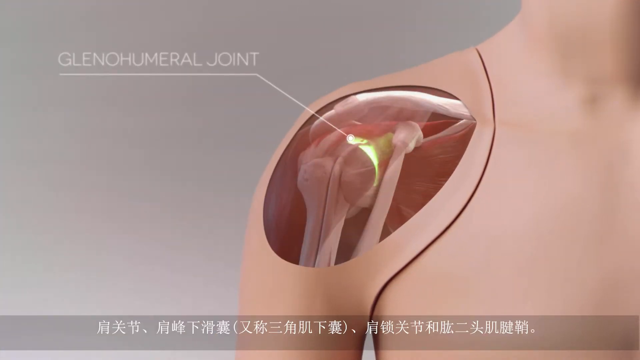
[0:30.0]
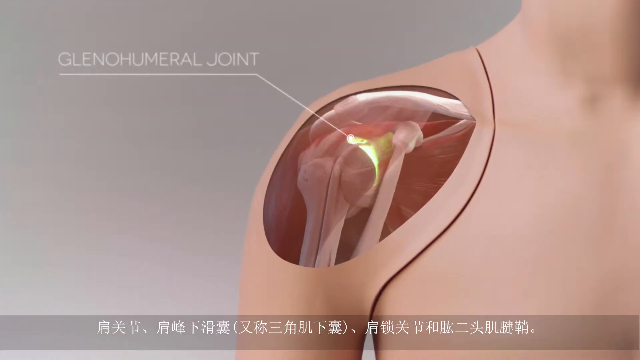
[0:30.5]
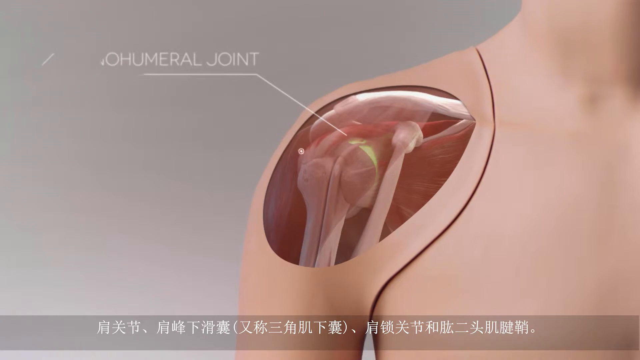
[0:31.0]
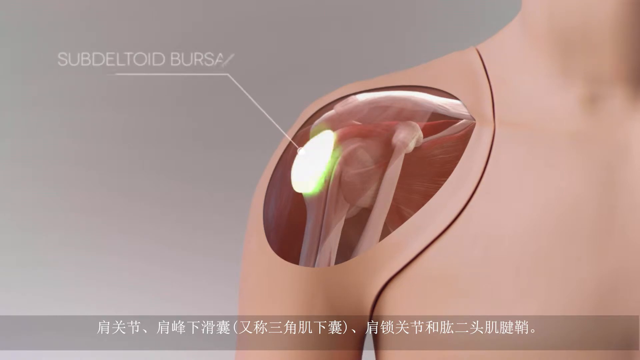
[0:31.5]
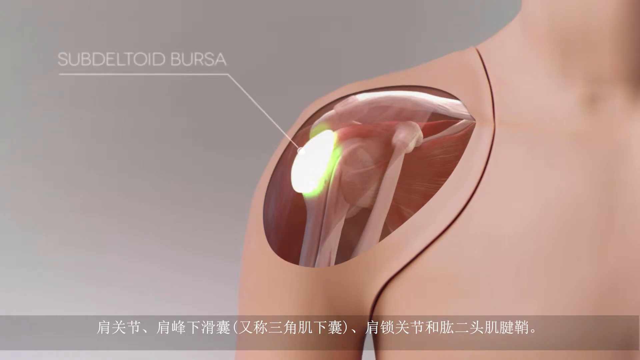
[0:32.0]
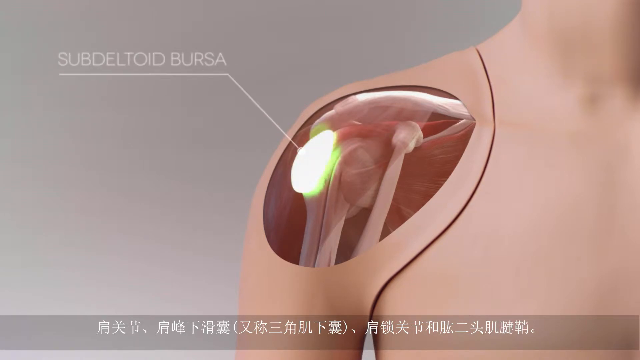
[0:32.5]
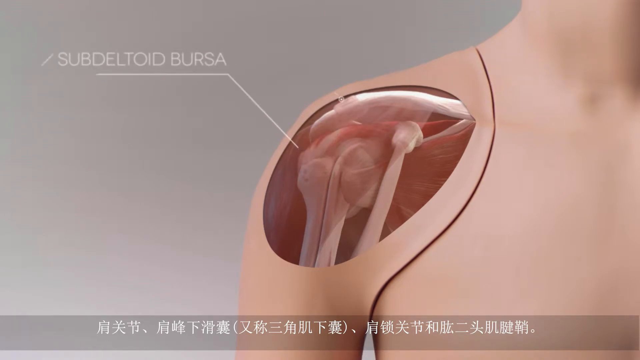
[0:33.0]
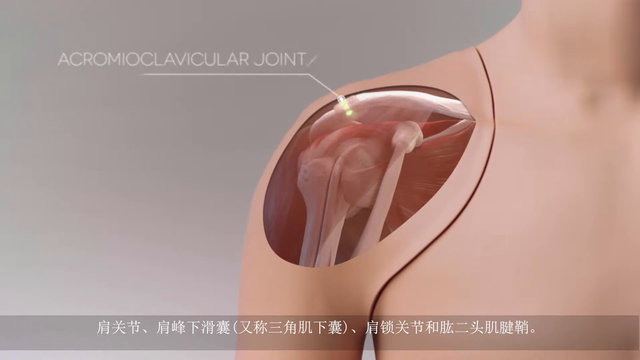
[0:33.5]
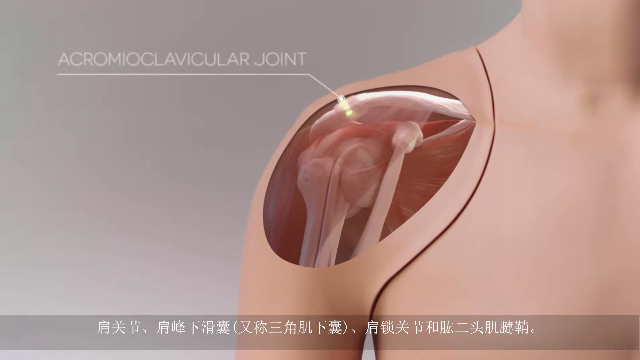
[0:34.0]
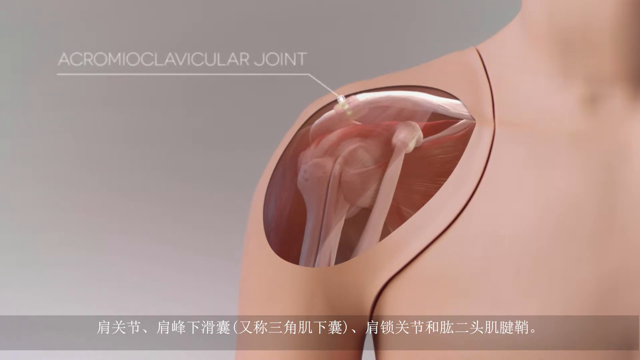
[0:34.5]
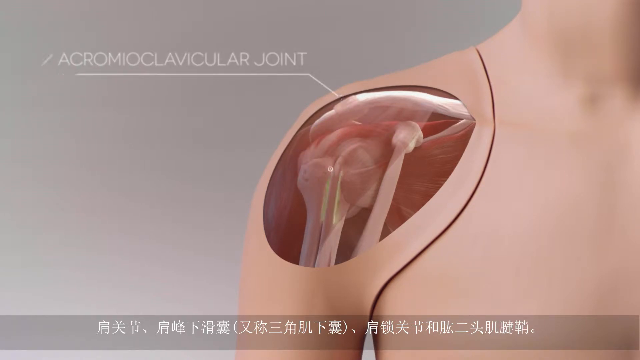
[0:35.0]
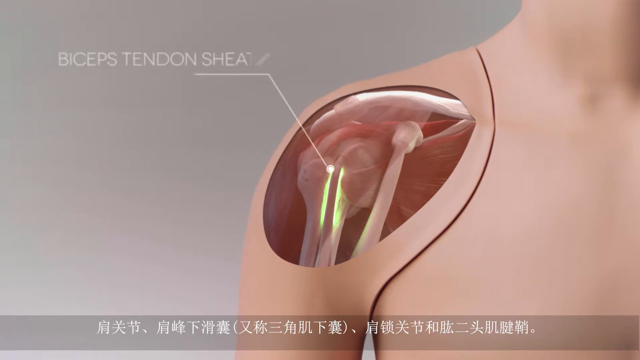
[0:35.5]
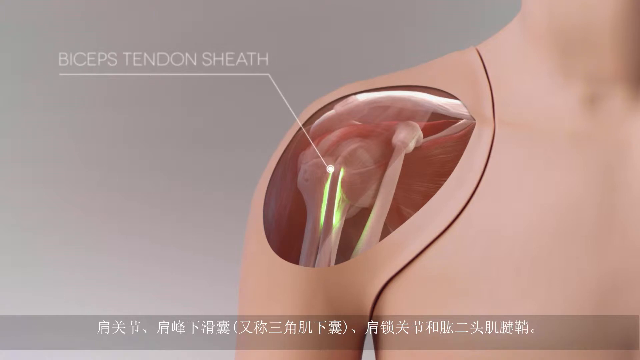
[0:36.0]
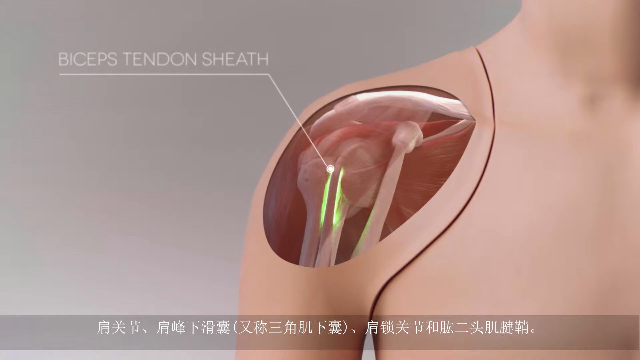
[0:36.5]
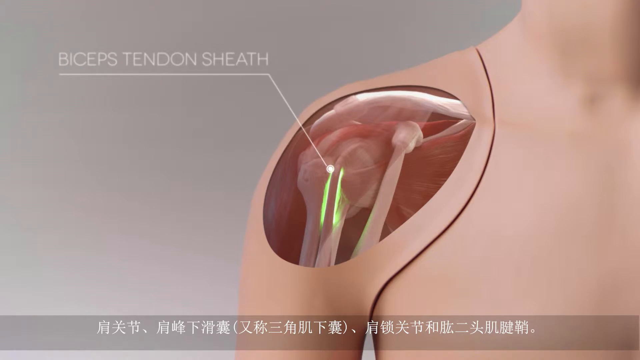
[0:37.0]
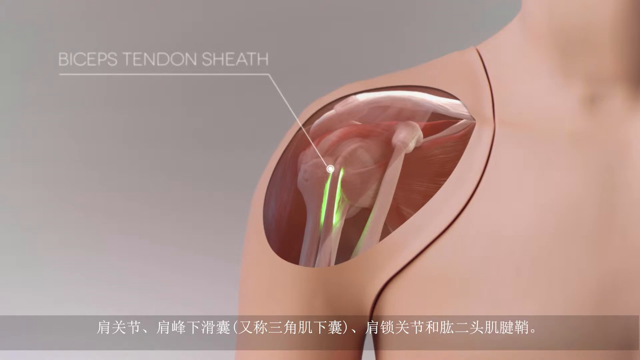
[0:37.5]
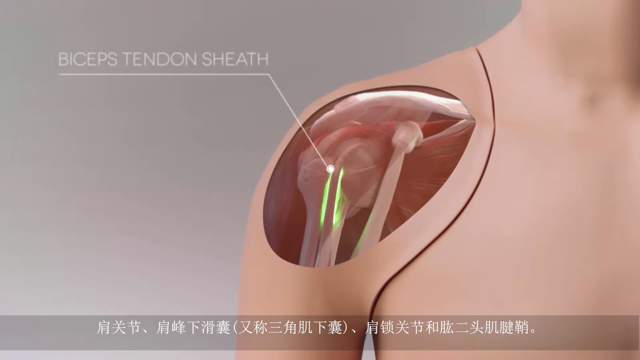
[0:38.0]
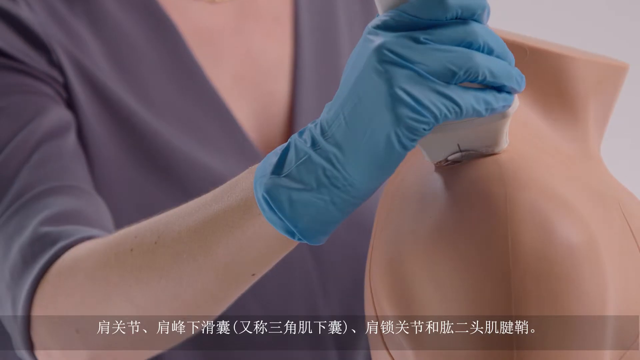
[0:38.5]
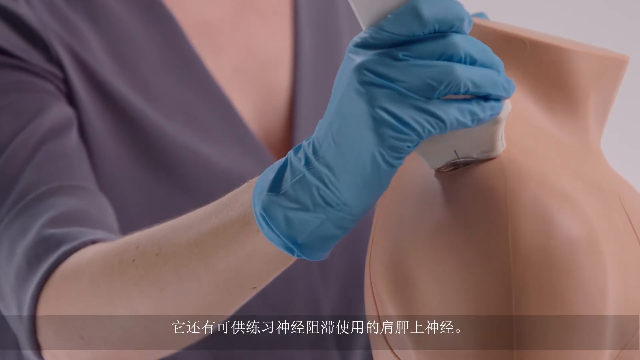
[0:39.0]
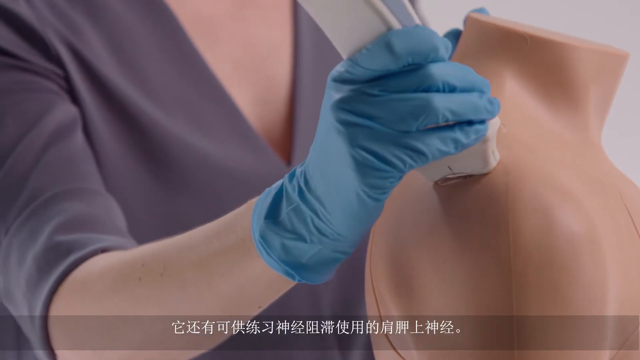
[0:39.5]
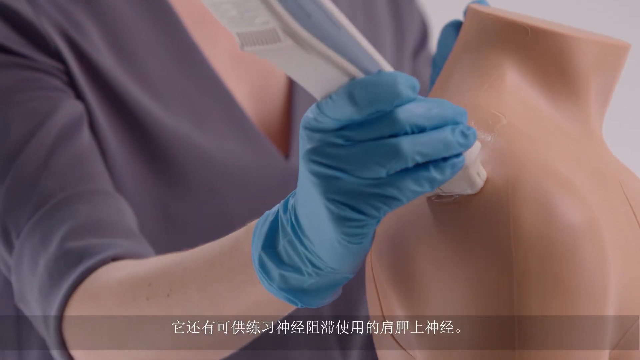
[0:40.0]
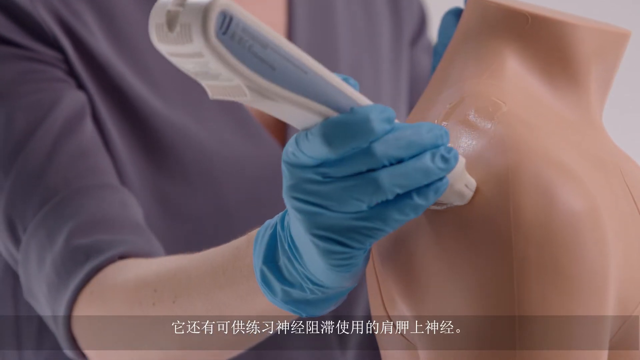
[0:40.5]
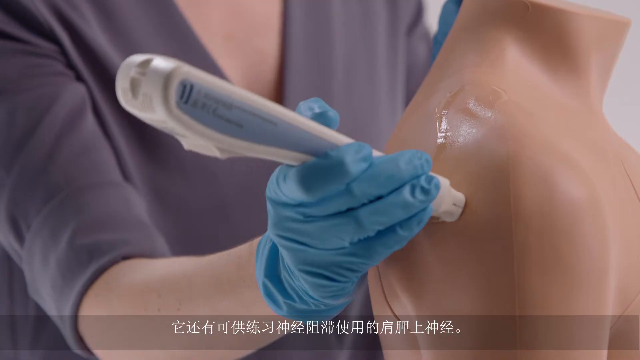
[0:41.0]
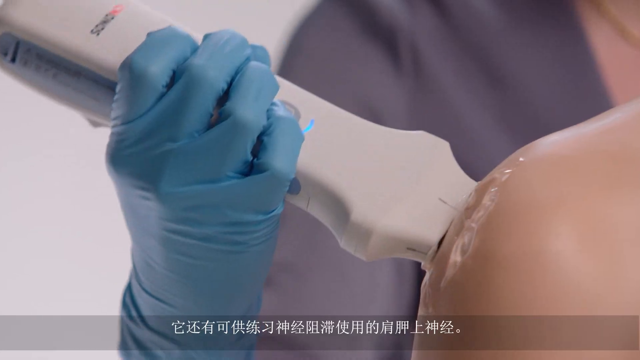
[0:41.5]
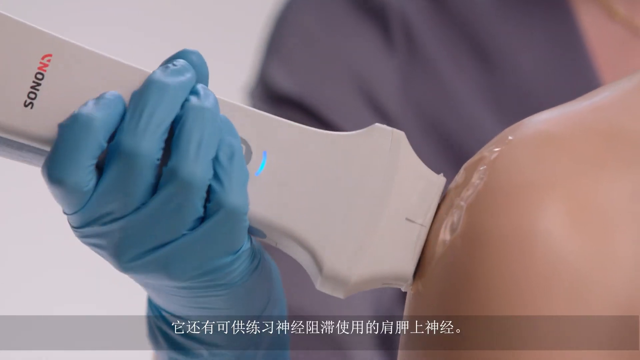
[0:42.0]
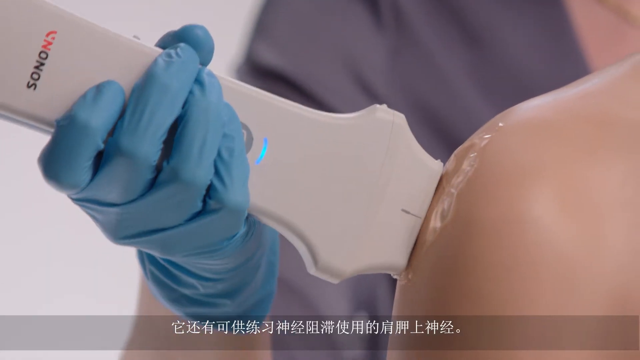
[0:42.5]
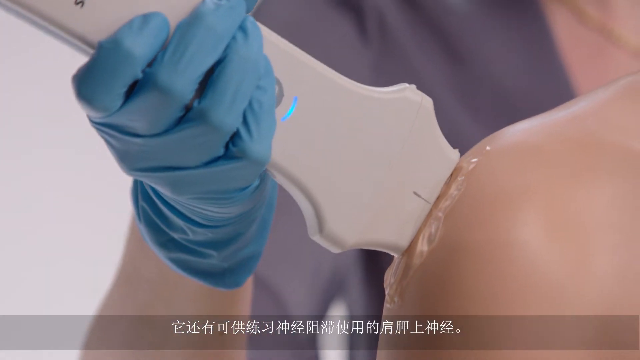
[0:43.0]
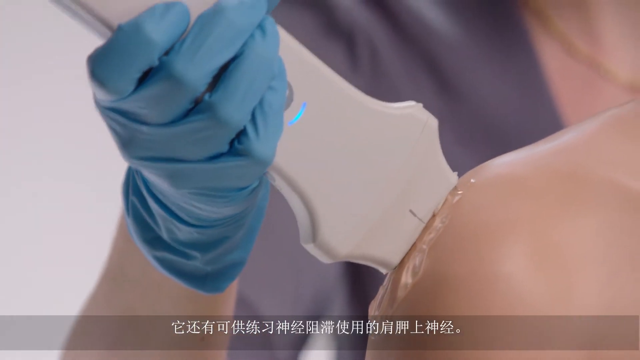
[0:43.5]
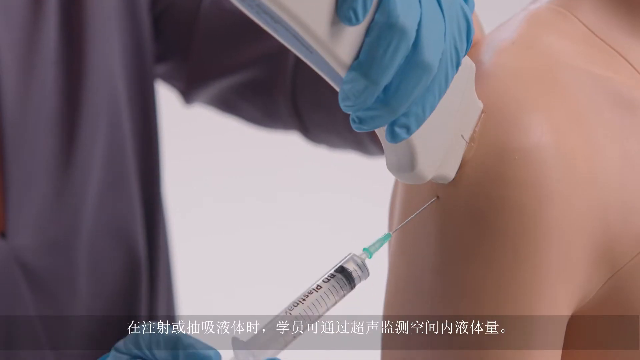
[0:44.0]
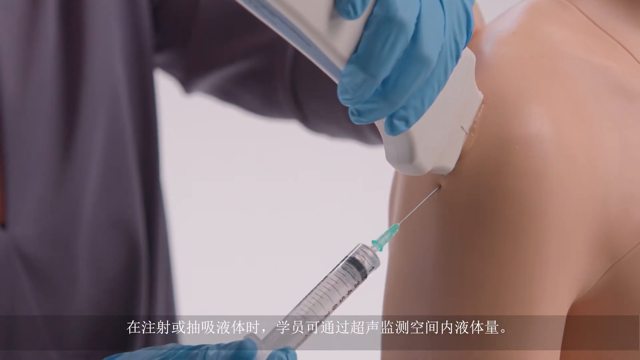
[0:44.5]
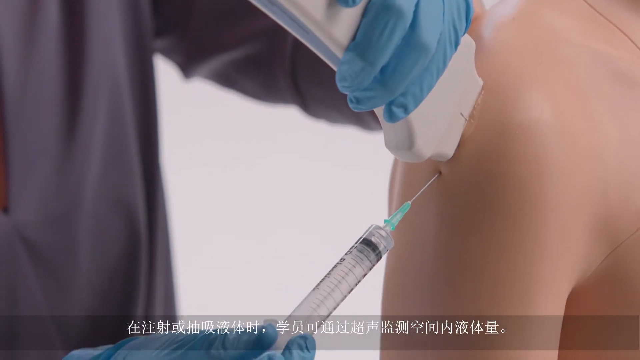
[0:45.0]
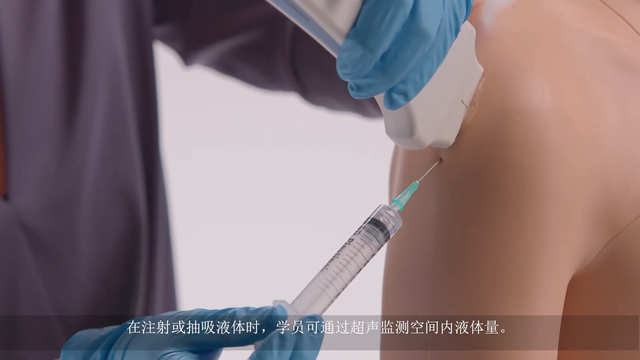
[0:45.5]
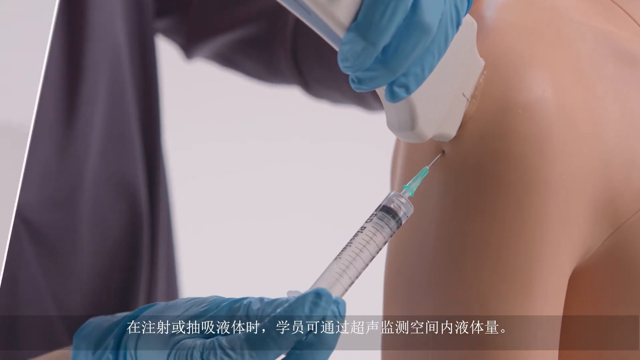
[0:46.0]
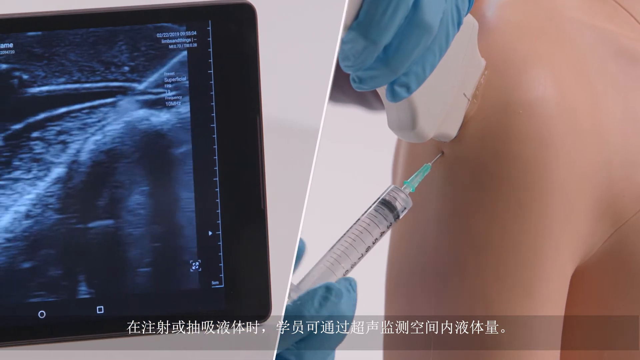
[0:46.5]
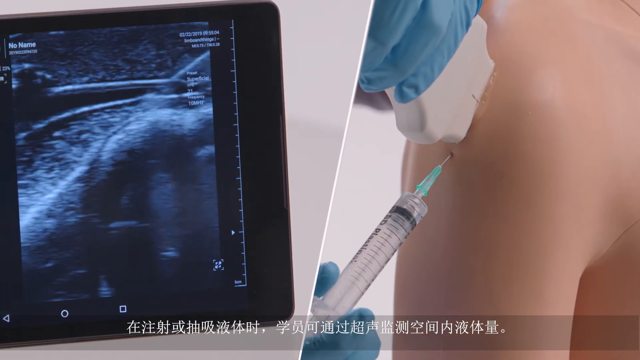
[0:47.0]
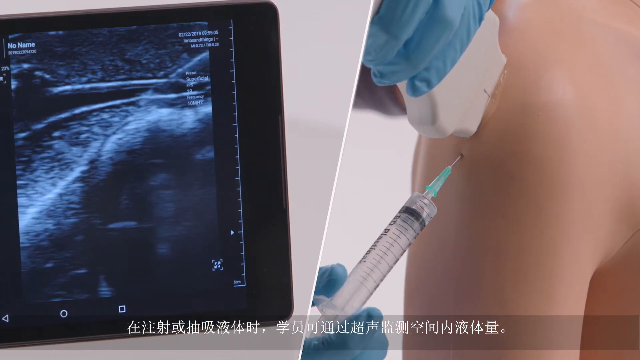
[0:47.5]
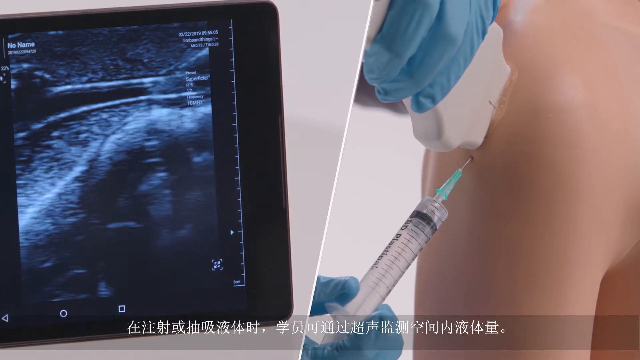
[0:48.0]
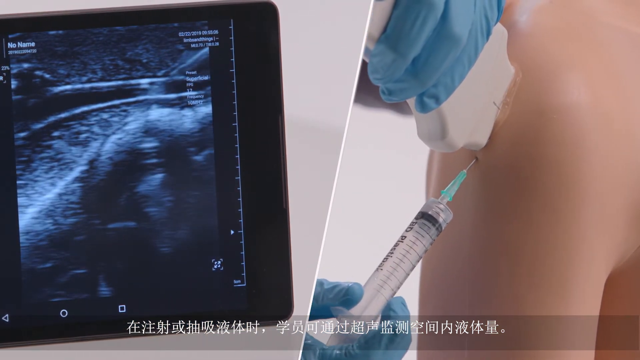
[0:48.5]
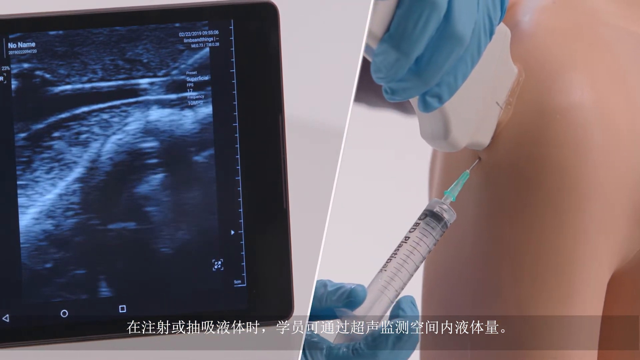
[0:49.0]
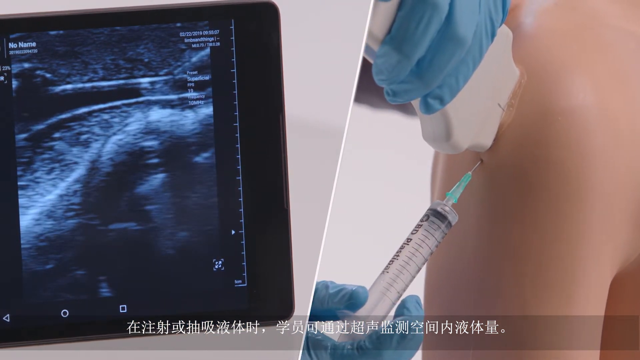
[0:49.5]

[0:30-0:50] A nurse or a student takes out the needle. An image of the rubber training dummy's shoulder appears as if the skin has been peeled back, showing the joint and bones underneath. Parts of the shoulder are named on screen: "glenohumeral joint", then "subdeltoid bursa", which is highlighted on the shoulder, then "acromioclavicular joint", highlighted in turn, then "biceps tendon sheath", also highlighted on the image. Next, the nurse technician, wearing bright blue surgical gloves, holds the scanning instrument and moves it over the dummy's shoulder, which has some clear gel on it. She finds a spot, inserts the needle into that area, and pushes in the plunger to do the injection. The iPad shows, via the scanner, exactly where the syringe needle is going.